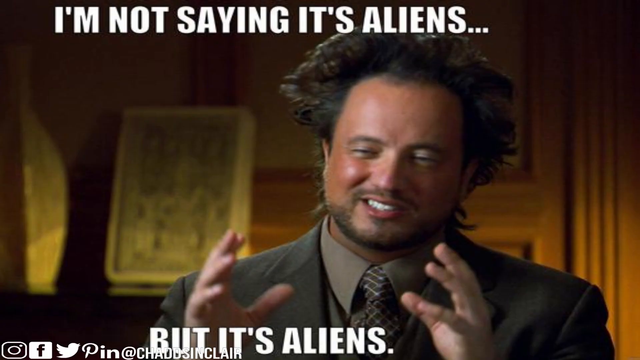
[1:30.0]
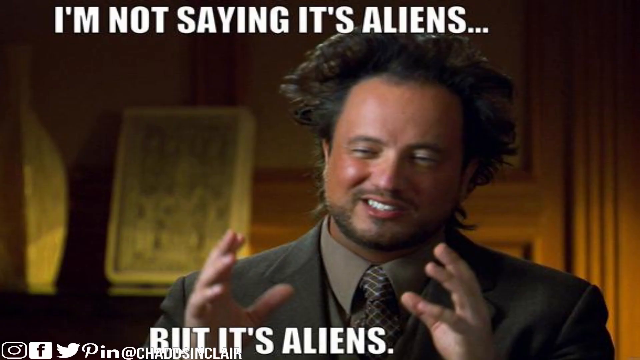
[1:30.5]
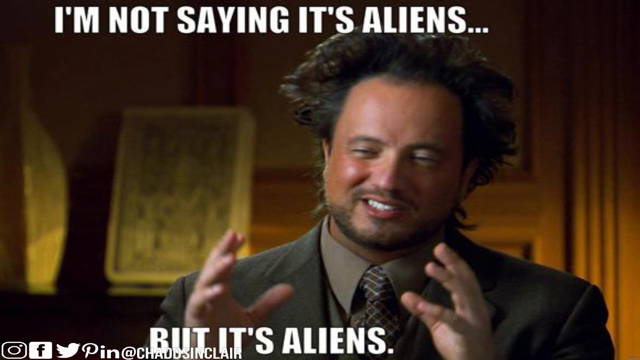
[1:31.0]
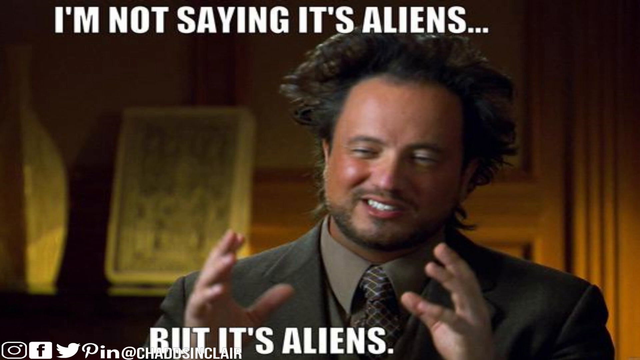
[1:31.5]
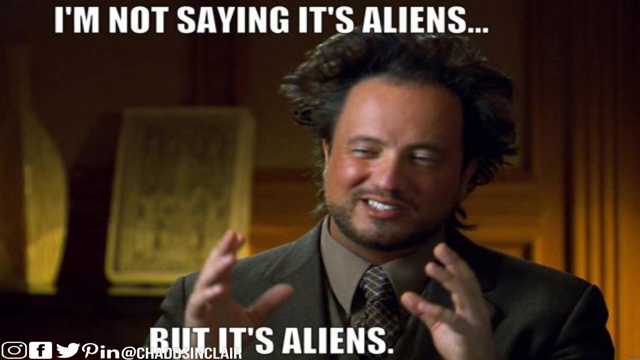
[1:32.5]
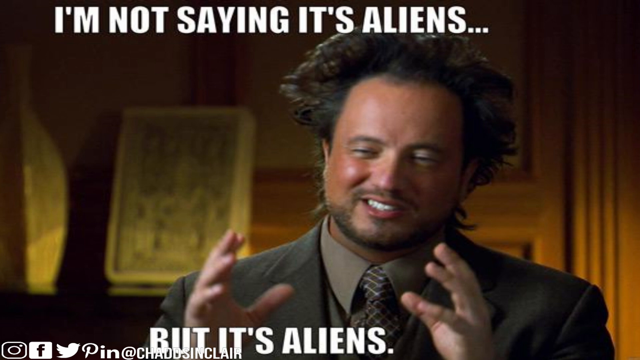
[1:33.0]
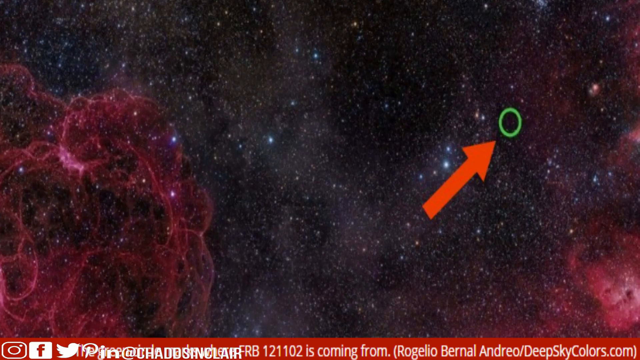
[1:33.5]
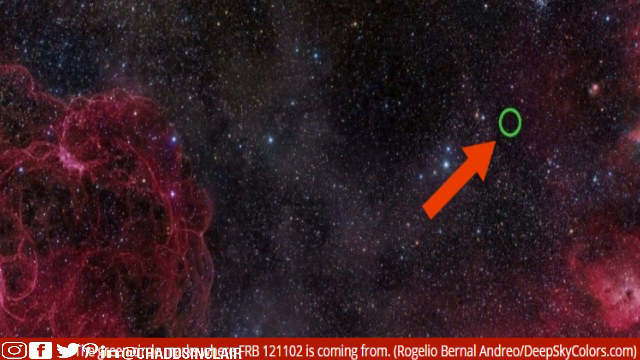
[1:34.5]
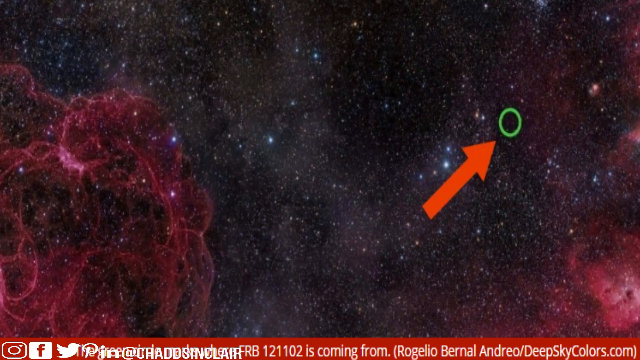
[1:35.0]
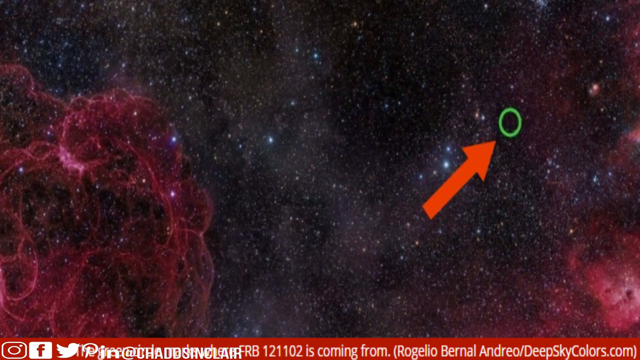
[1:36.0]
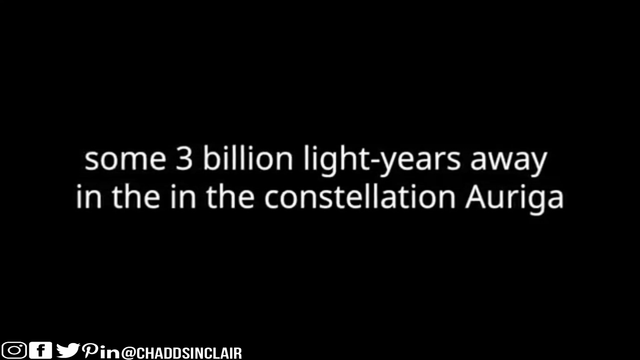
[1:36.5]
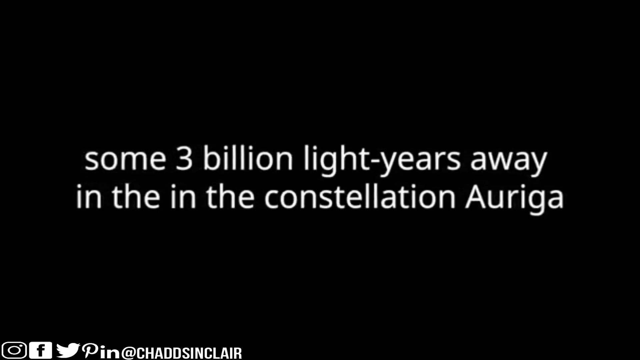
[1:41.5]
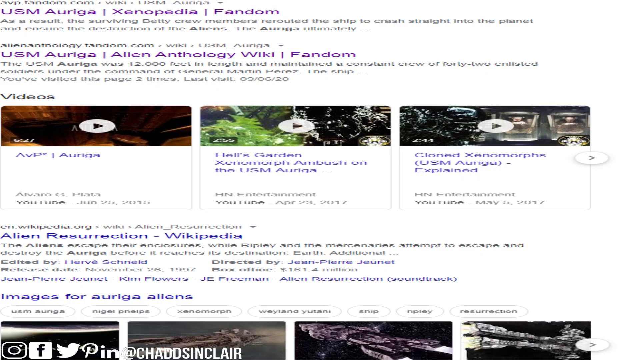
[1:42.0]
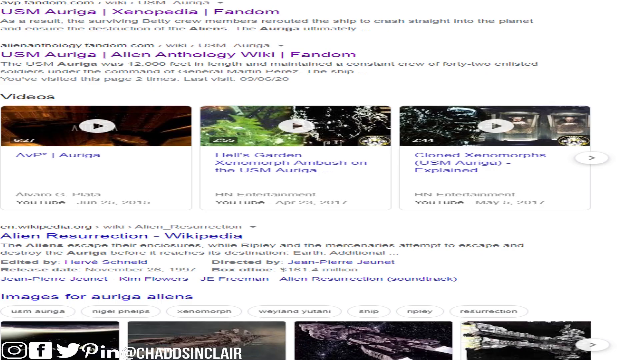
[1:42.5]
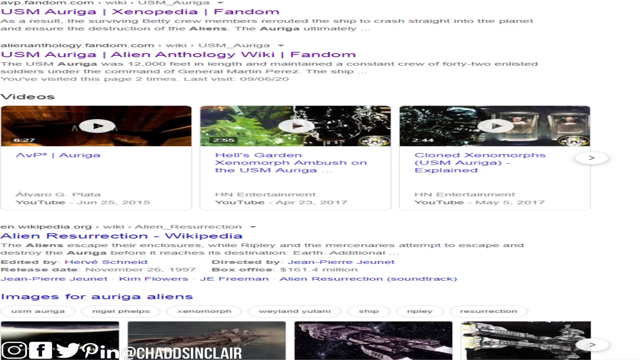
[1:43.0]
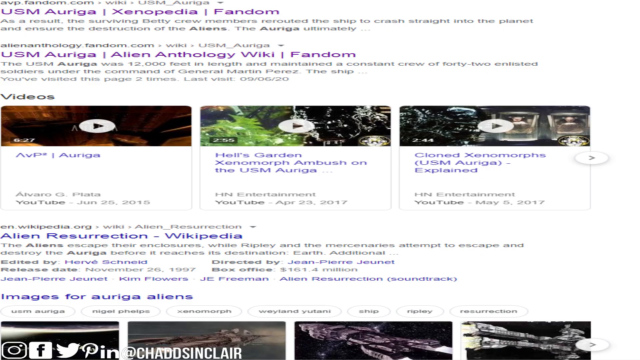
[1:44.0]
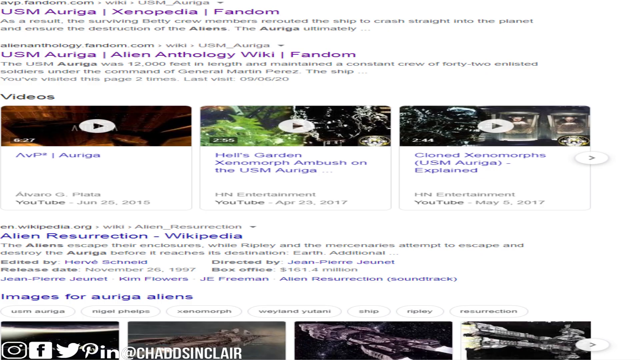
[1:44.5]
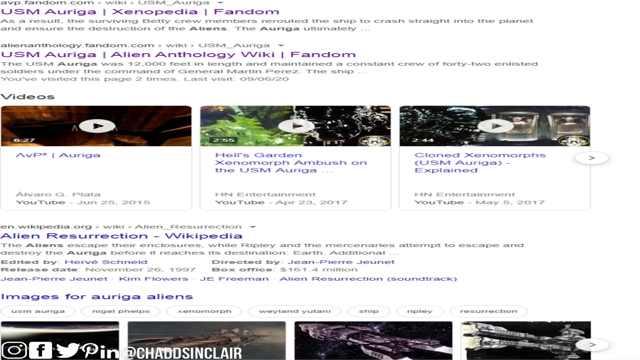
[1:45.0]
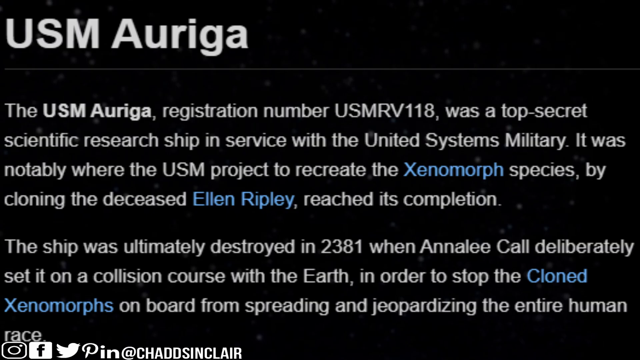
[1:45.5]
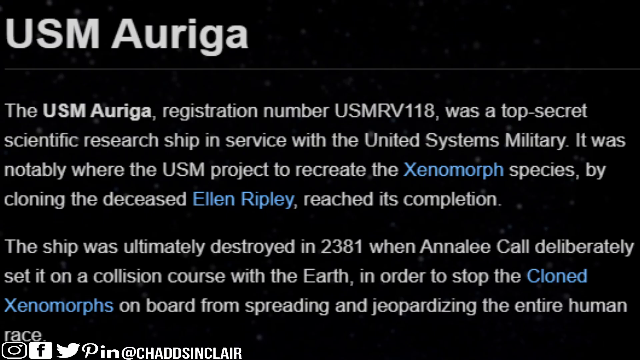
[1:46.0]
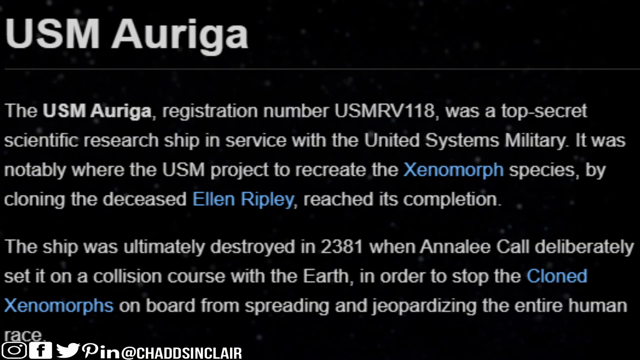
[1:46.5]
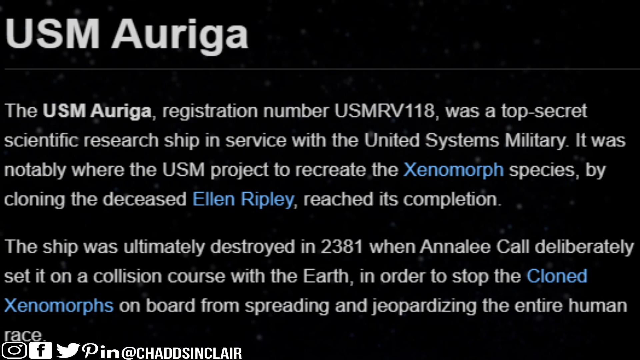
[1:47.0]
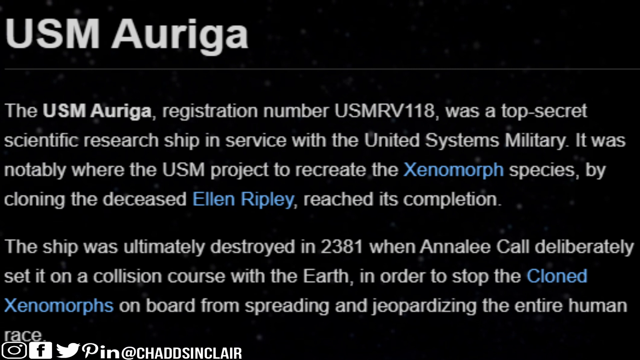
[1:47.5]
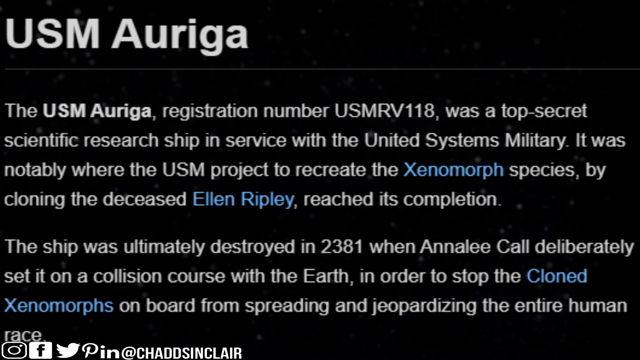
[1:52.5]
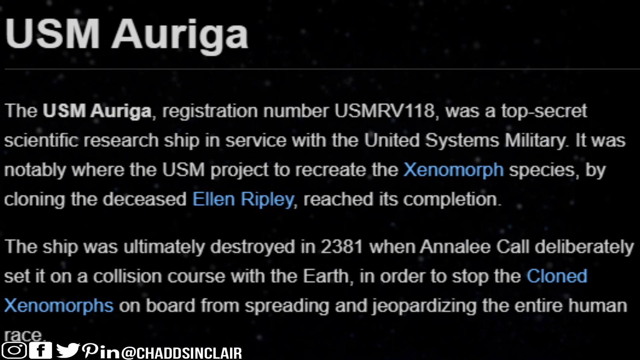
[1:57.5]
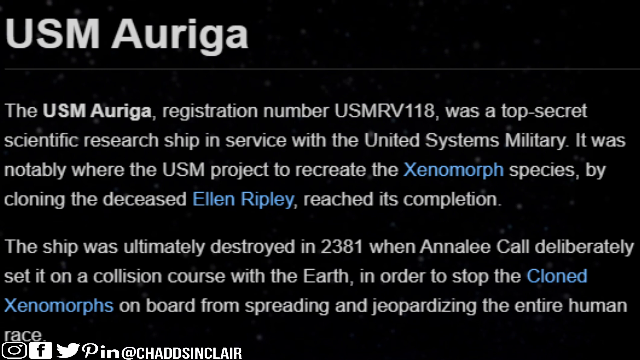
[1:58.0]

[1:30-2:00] A meme appears on the left. At the top, white bold all-caps text reads "I'm not saying it's aliens.." above a picture of a man whose hair sticks up as if he had been shocked by electricity. He wears a dark suit, possibly brown, with a matching shirt, and has both hands up. At the bottom it reads "but it's aliens." A red arrow points diagonally toward the upper right at a green circle; what is inside the circle is hard to see, possibly the FRB. White text reads "some 3 billion light-years away" and, on the next line, "in the constellation Auriga". A blurry Google search follows, showing "alien resurrection" on Wikipedia, three videos with a video play button, and "USN Auriga".